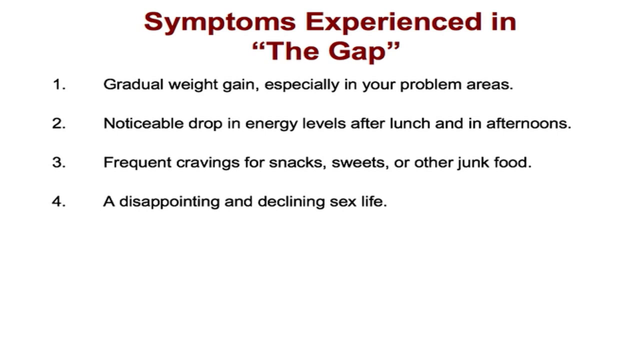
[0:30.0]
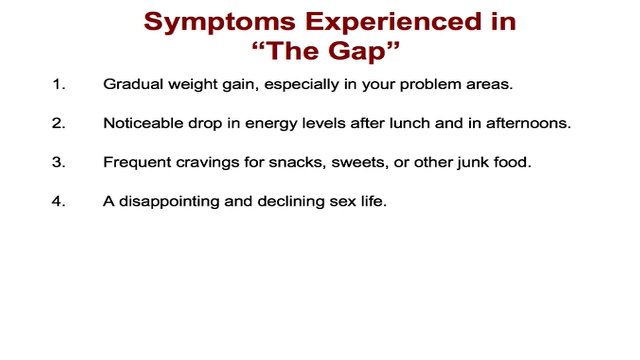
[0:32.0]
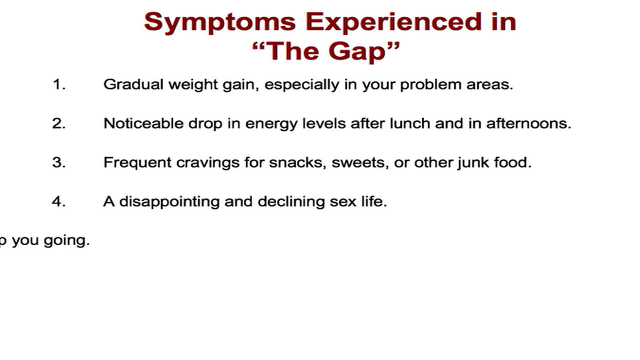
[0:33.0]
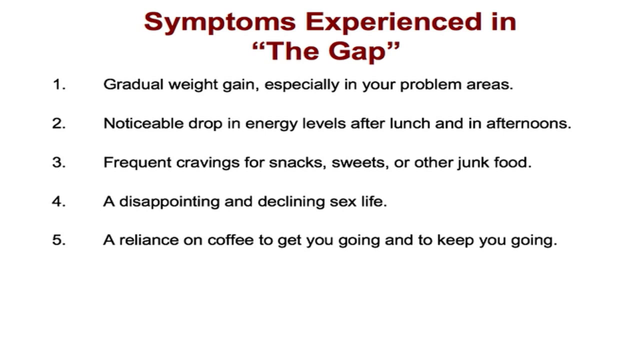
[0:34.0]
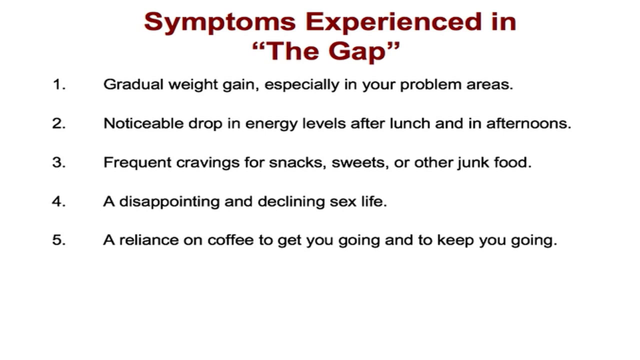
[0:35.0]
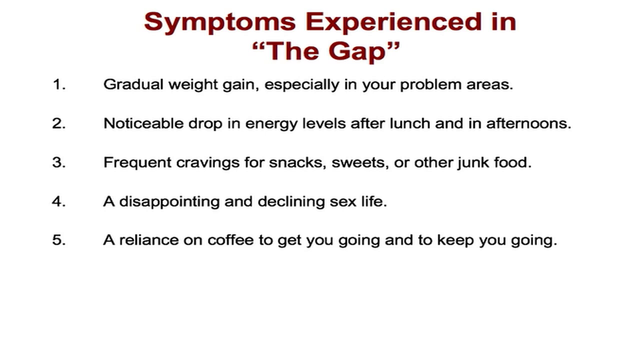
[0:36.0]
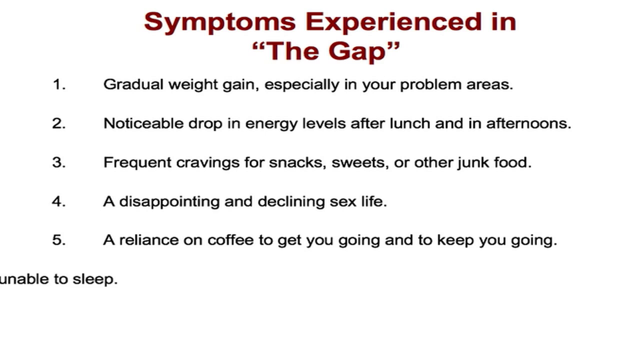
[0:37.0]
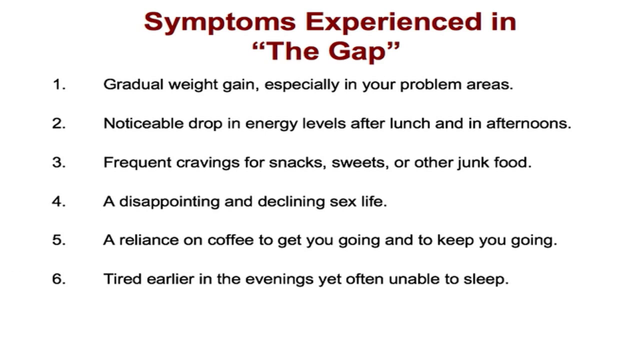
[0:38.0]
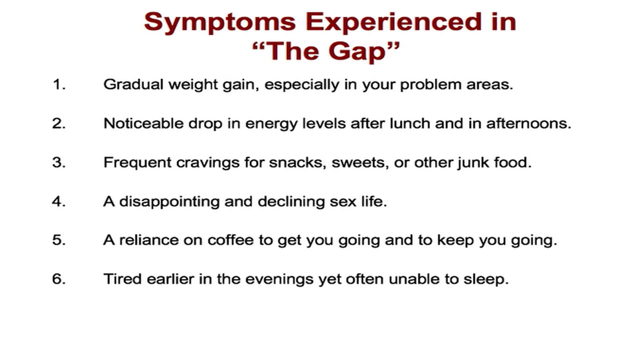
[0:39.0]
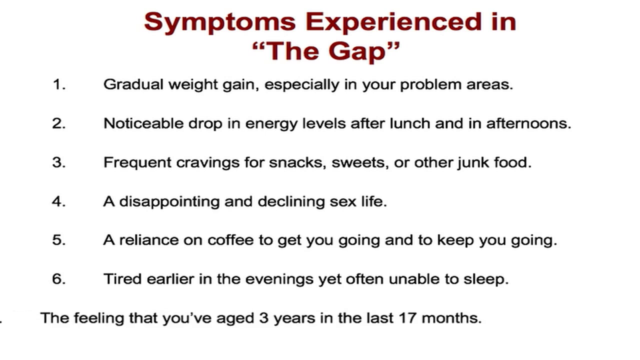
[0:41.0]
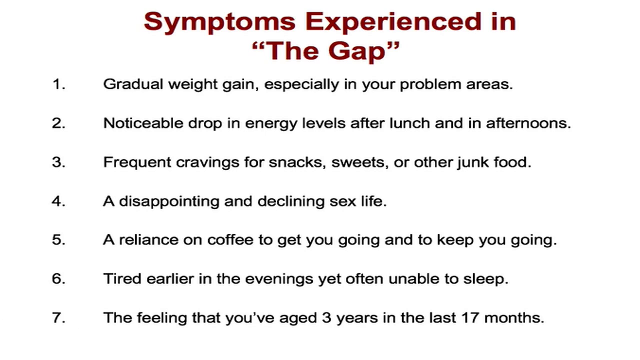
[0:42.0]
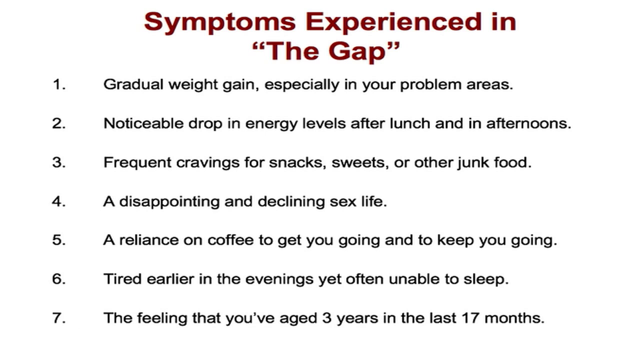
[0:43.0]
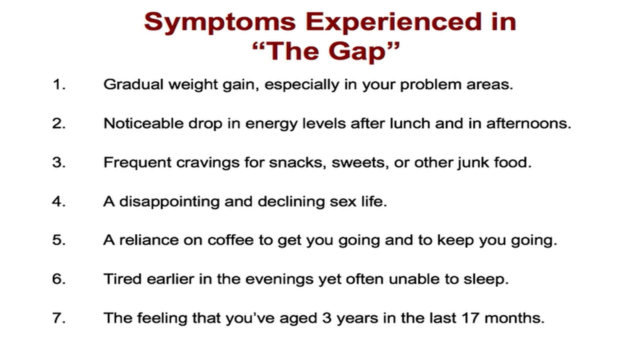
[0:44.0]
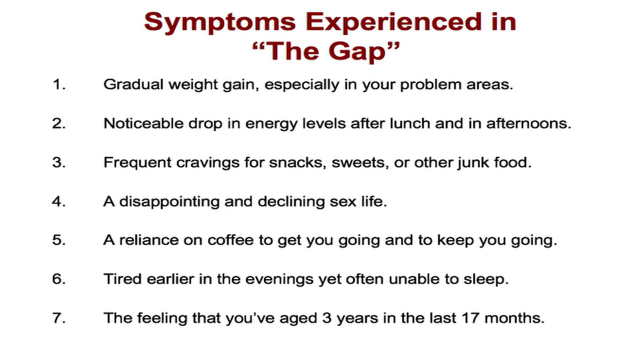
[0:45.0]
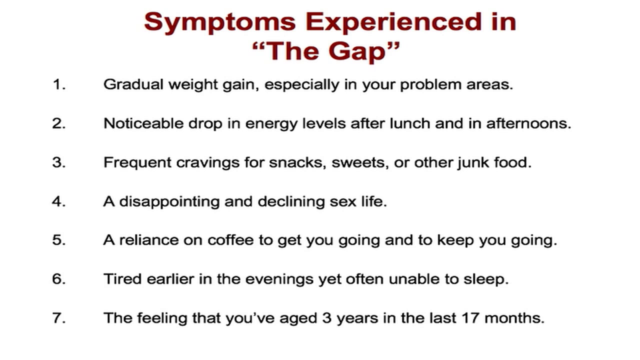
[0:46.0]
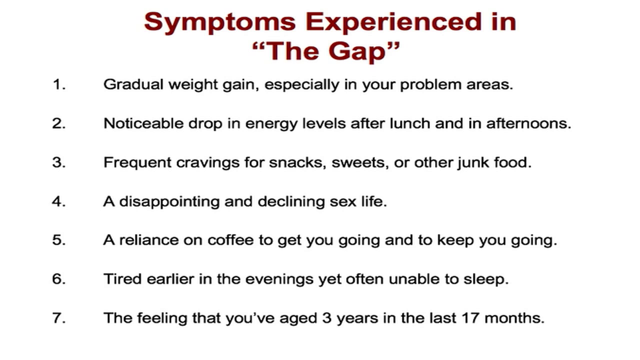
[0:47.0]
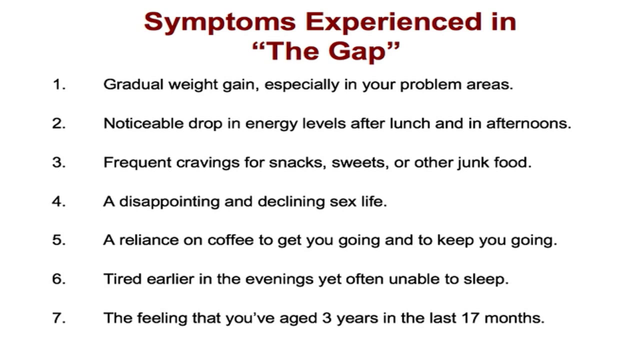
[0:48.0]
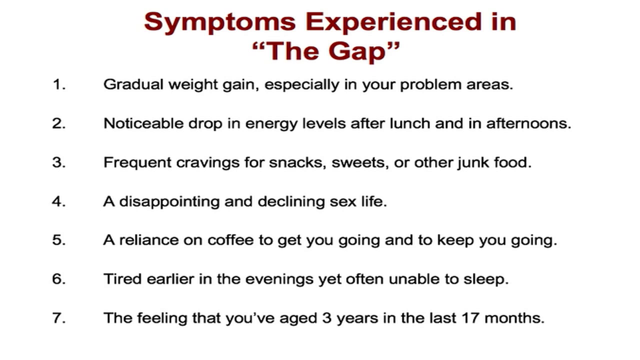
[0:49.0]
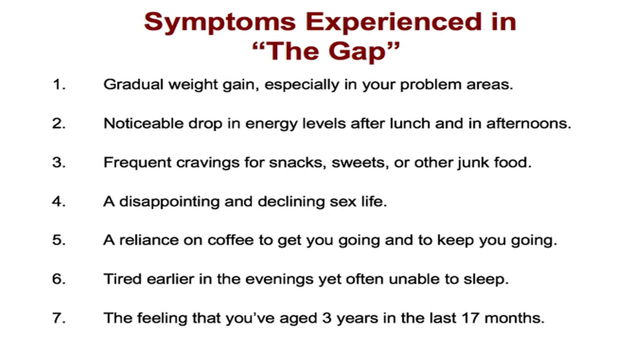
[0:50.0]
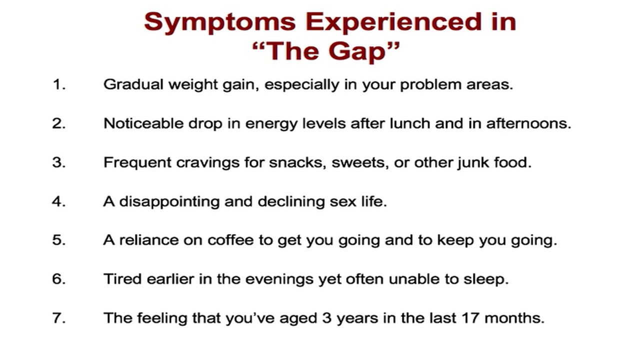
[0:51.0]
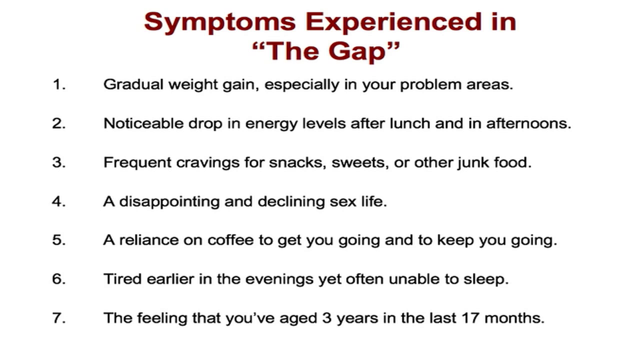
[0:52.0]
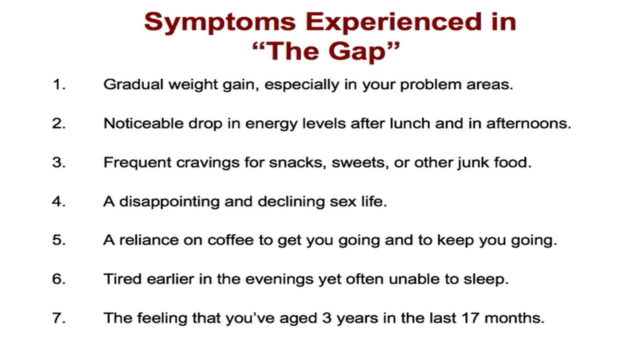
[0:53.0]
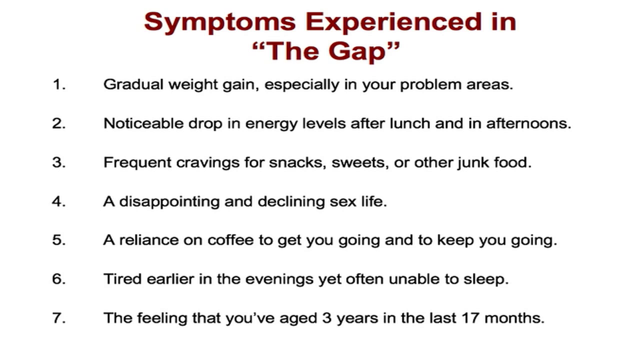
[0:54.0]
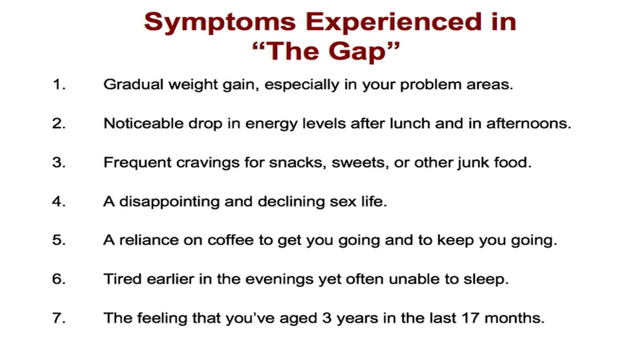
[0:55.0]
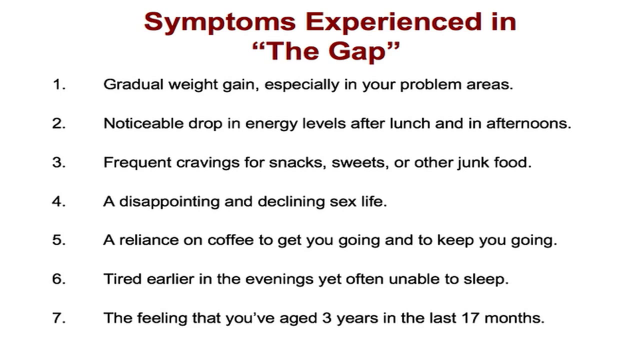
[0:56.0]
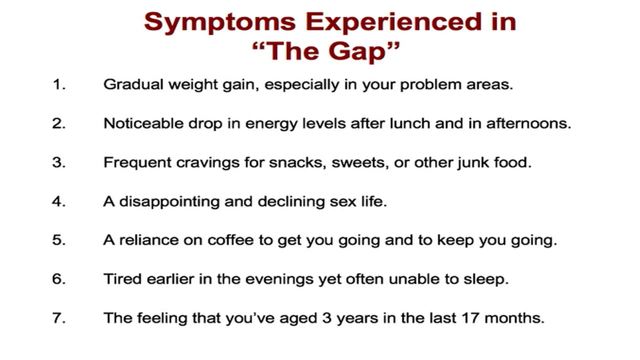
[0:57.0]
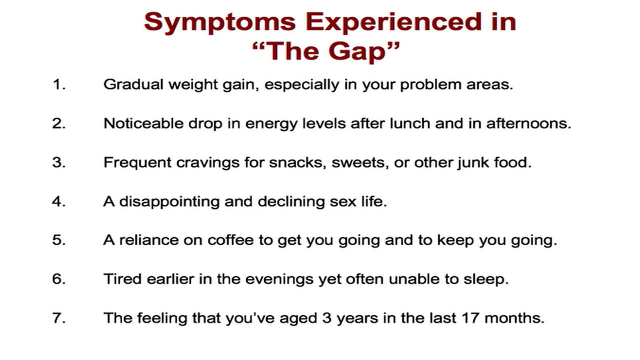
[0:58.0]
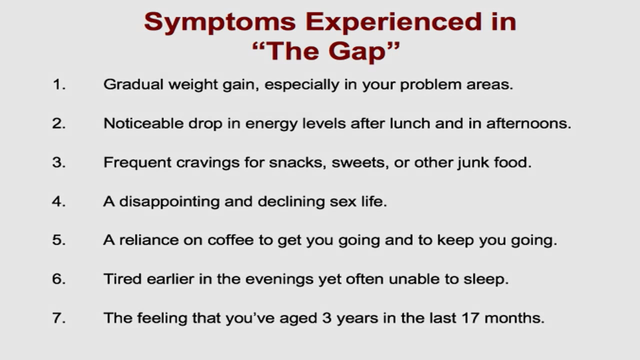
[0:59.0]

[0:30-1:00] The on-screen list of "symptoms experienced in the gap" continues. It reads "gradual weight gain, especially in your problem areas", "noticeable drop in energy levels after lunch and in afternoon", "frequent cravings for snacks, sweets or other junk food", and "a disappointing and declining sex life". A fifth item reads "a reliance on coffee to get you going and to keep you going", a sixth reads "tired earlier in the evening yet often unable to sleep", and a seventh reads "the feeling that you have aged three years in the last 17 months".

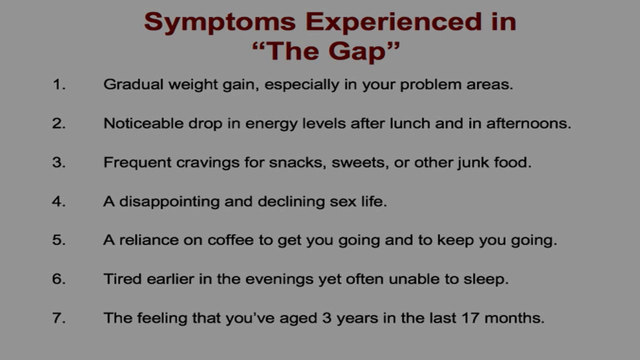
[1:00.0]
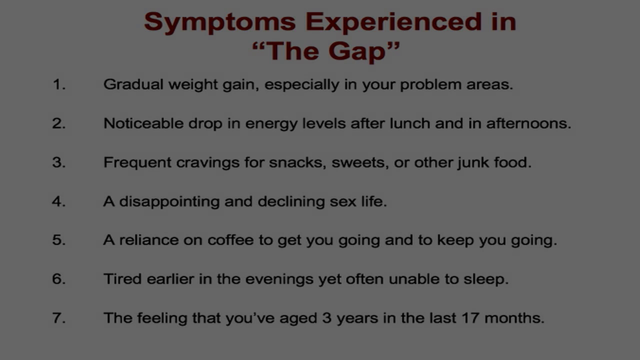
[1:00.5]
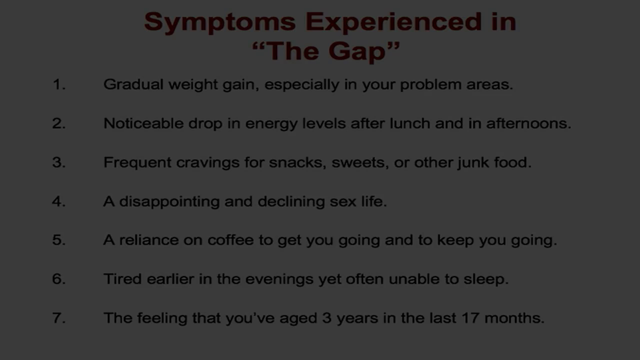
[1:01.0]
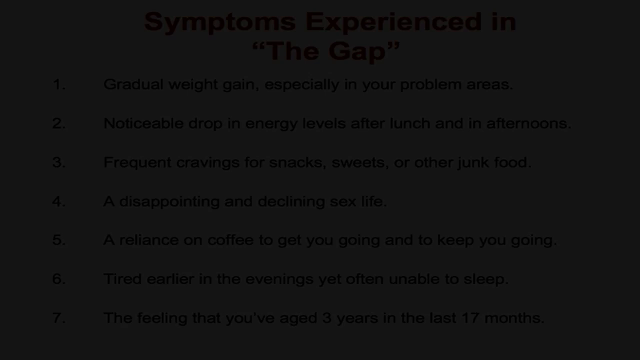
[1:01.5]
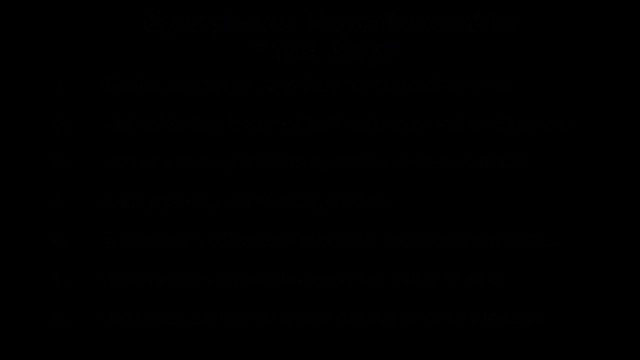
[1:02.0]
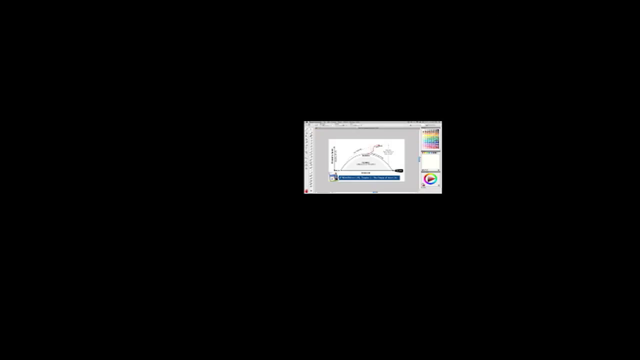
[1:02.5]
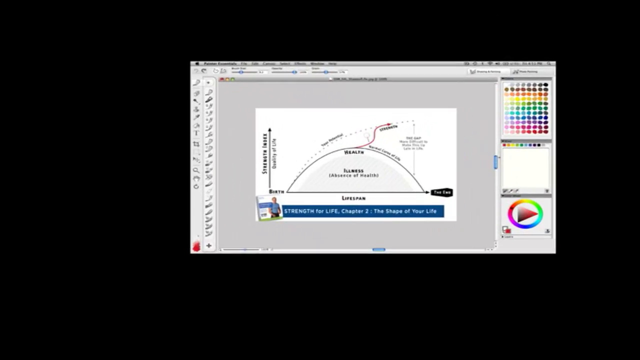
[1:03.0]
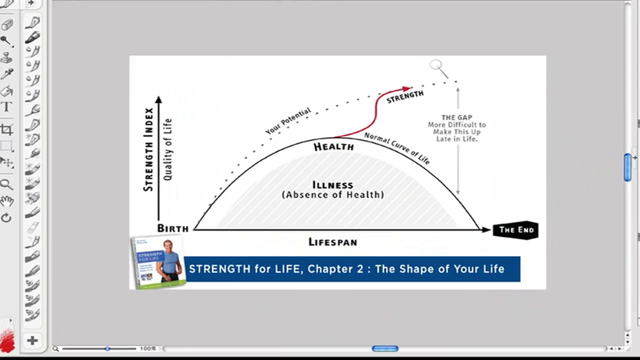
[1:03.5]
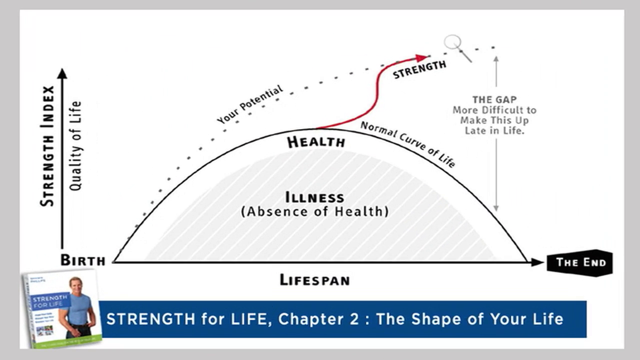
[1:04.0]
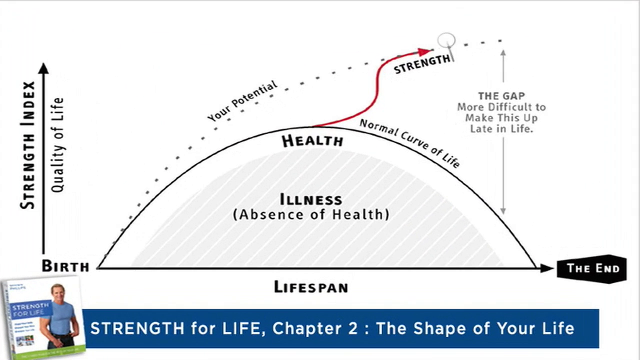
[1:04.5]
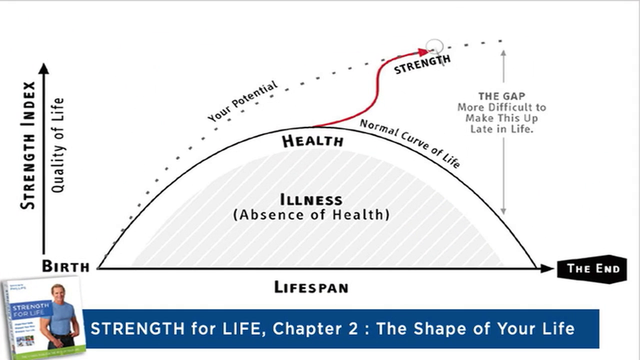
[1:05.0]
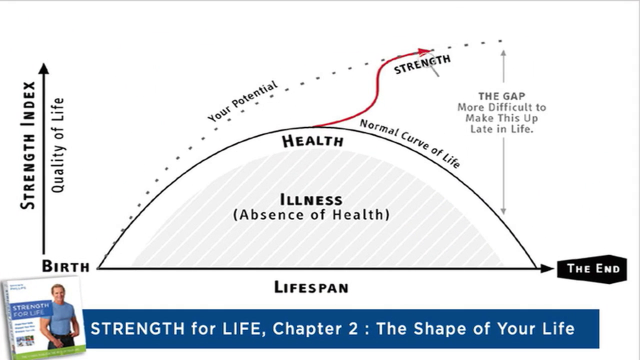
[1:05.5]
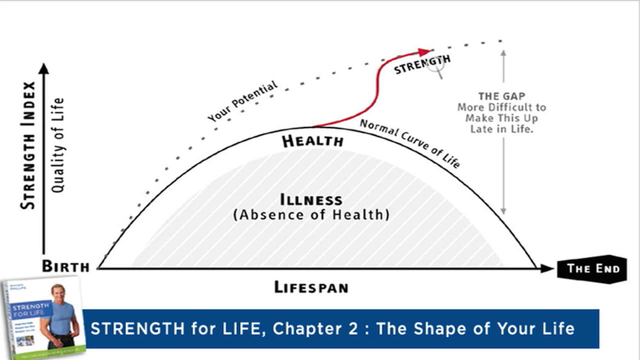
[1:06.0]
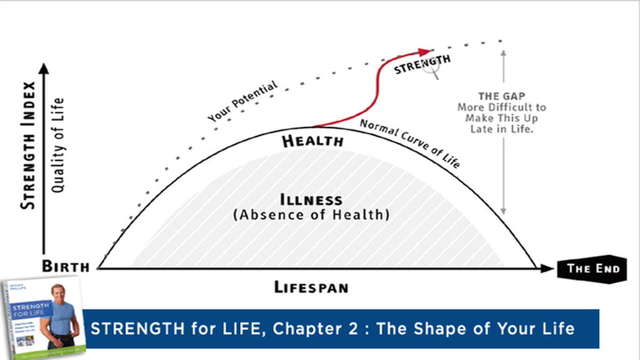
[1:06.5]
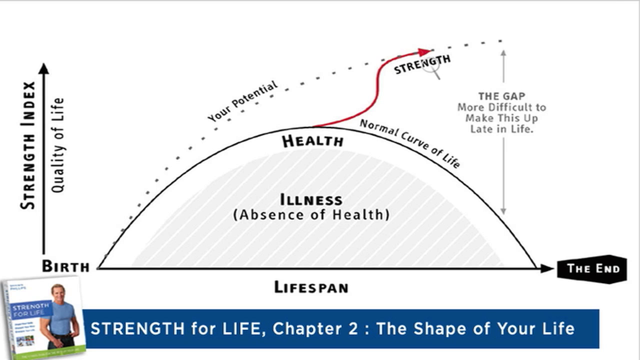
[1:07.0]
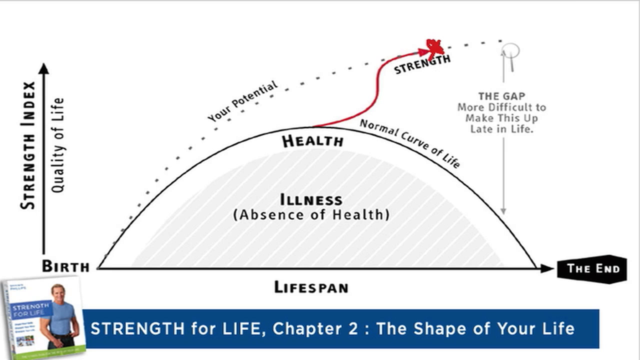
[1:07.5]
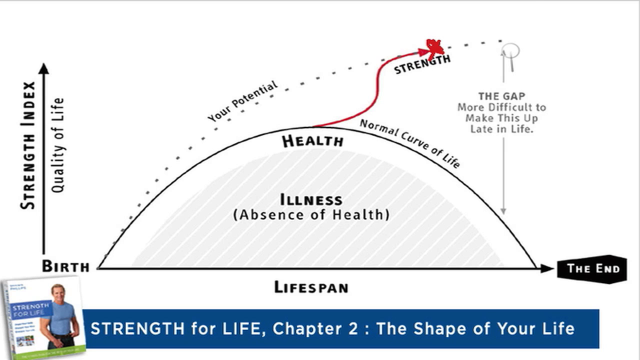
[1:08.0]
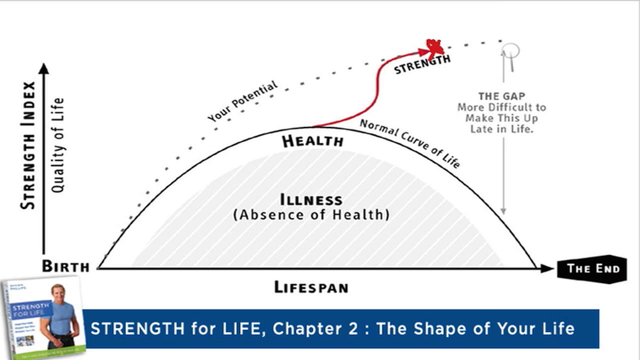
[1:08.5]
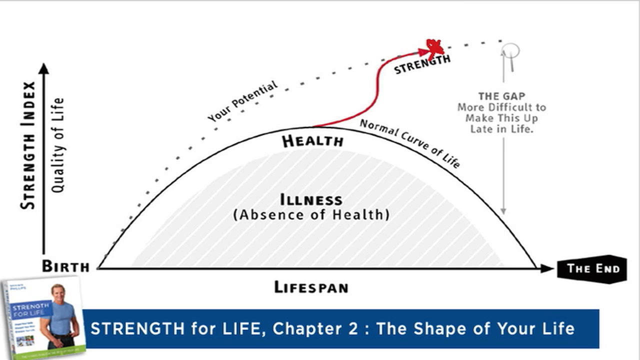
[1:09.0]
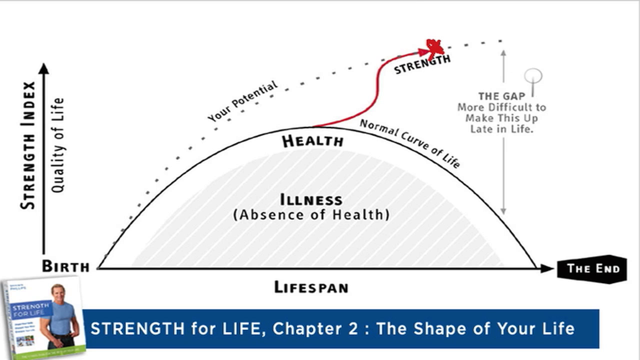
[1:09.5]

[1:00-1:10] Next, a screen appears with a graph and the words "strength index" and "quality of life". The graph points to "potential", with terms including "strength", "health", "normal", "illness" and "absence of health", along with "lifestyle", "the gap" and "more difficult to make this up later on".